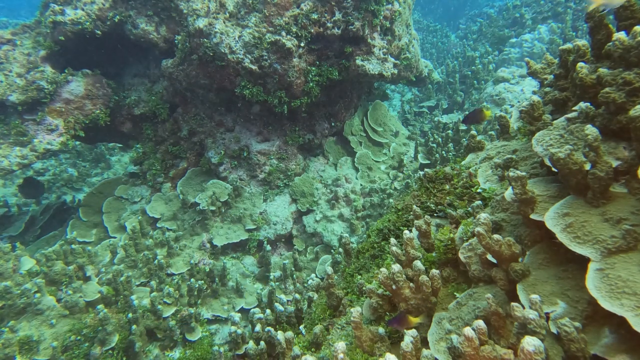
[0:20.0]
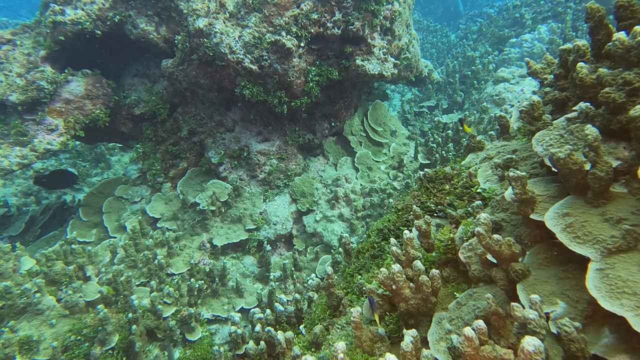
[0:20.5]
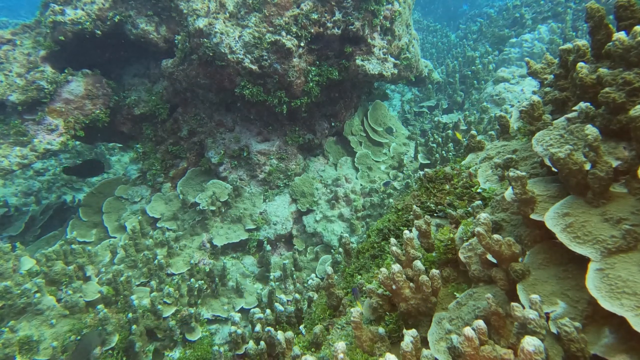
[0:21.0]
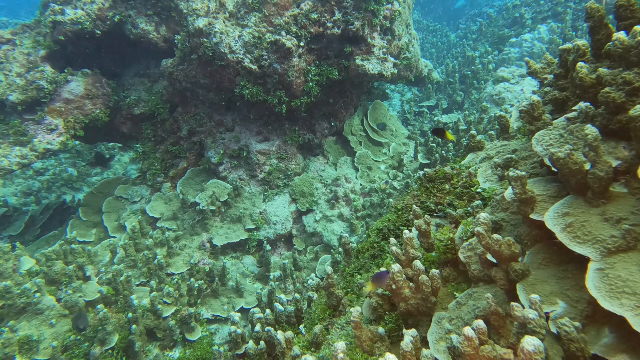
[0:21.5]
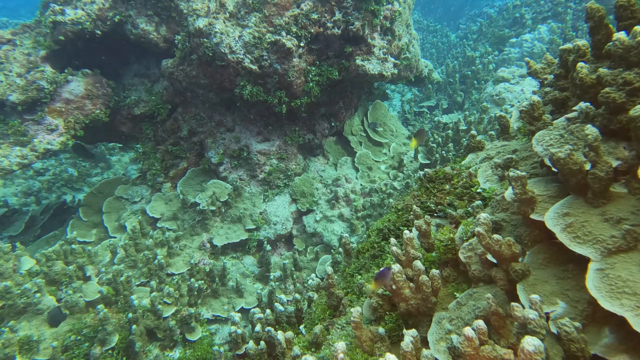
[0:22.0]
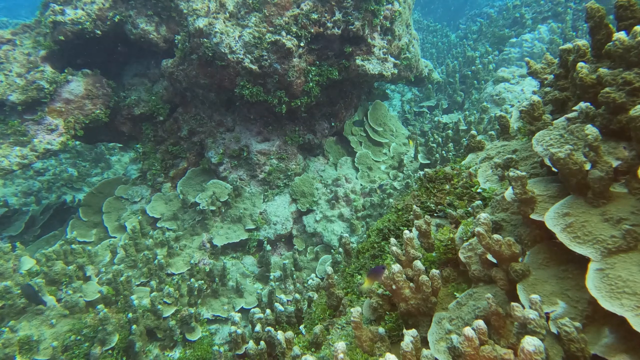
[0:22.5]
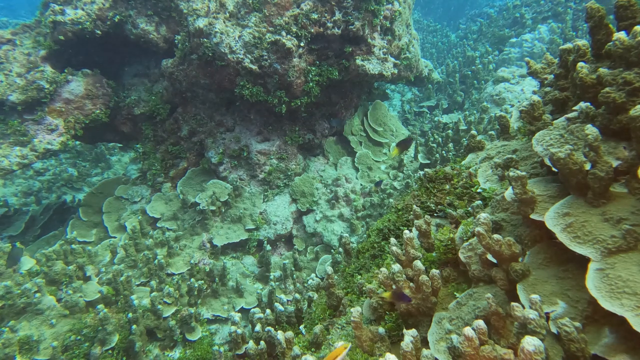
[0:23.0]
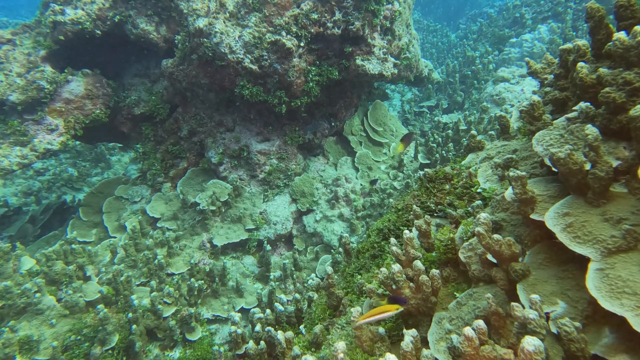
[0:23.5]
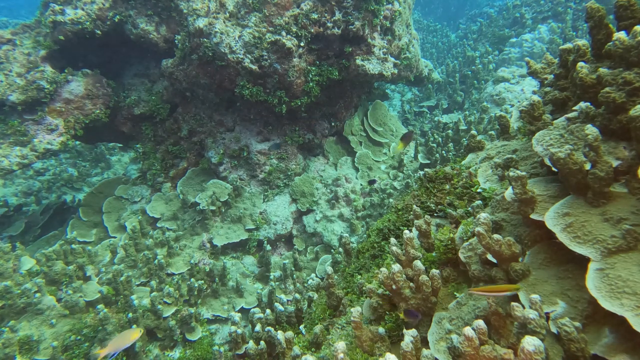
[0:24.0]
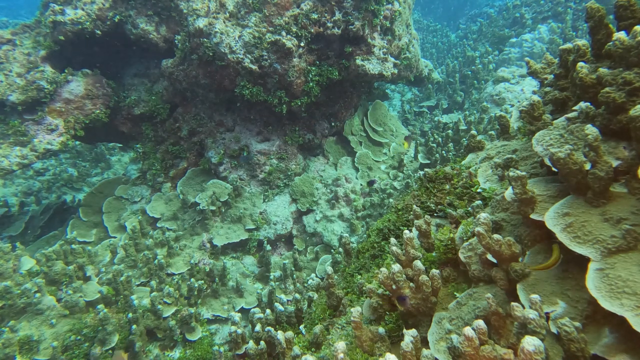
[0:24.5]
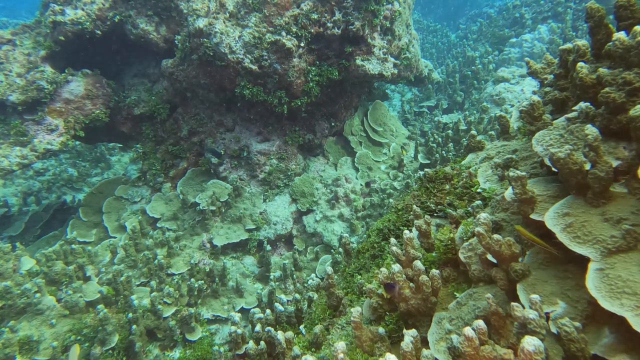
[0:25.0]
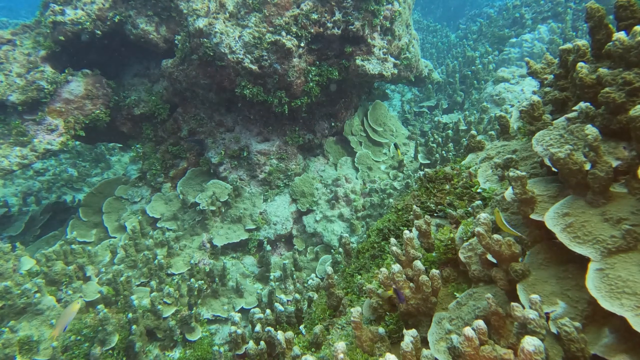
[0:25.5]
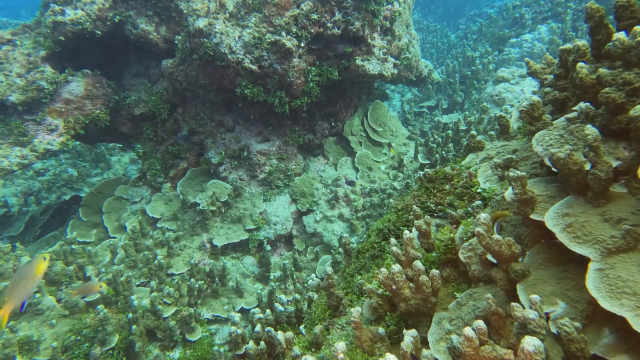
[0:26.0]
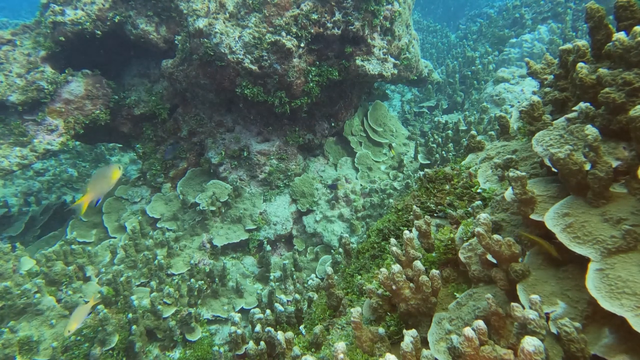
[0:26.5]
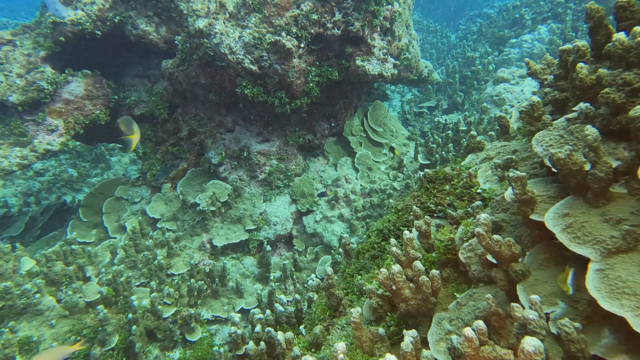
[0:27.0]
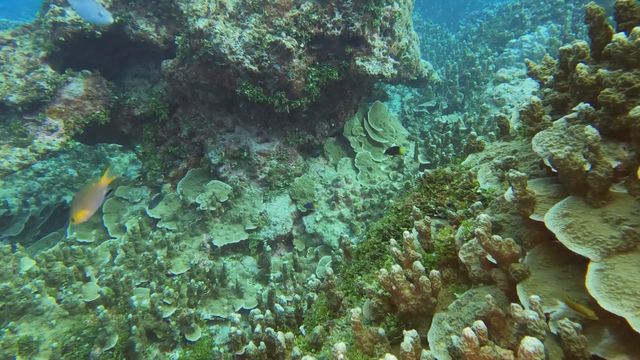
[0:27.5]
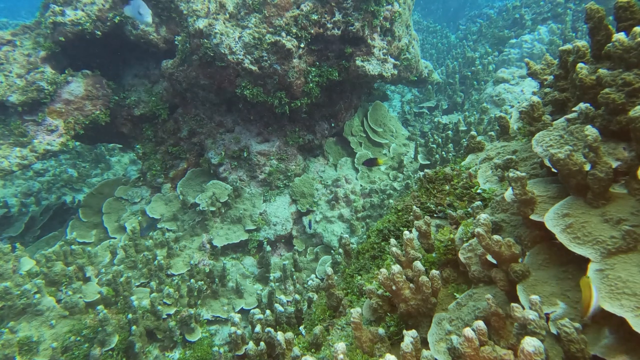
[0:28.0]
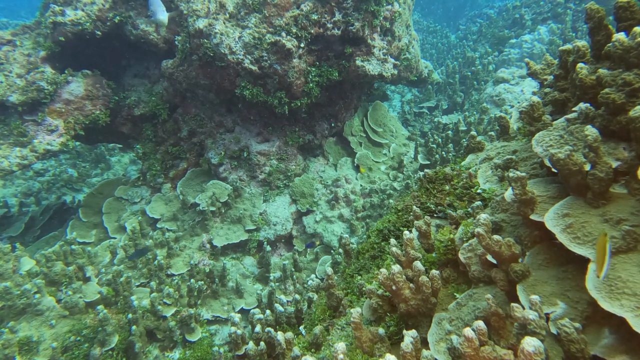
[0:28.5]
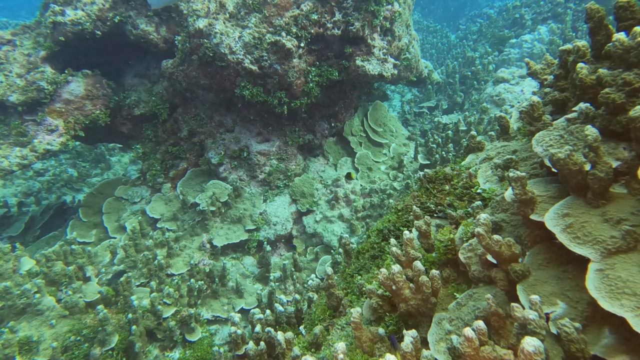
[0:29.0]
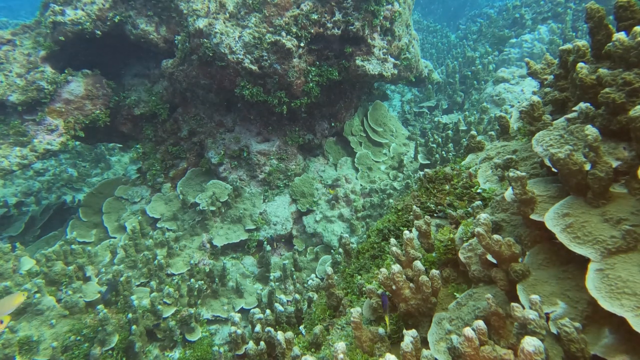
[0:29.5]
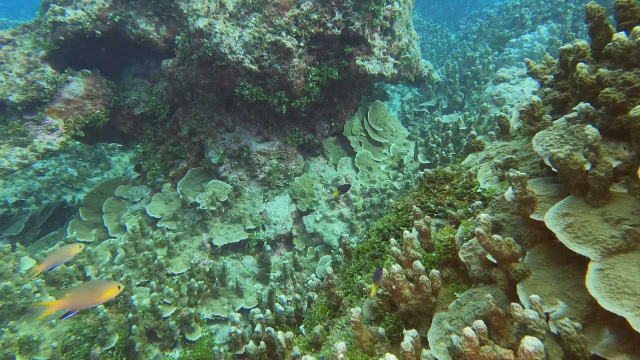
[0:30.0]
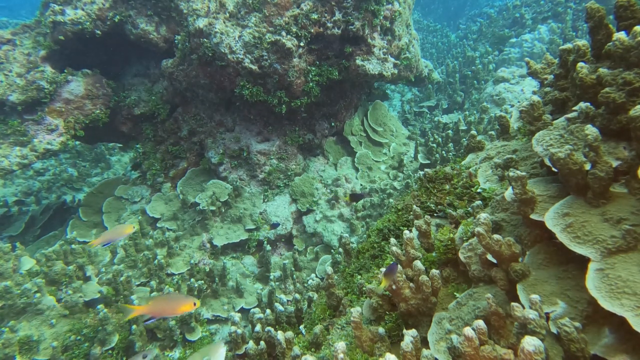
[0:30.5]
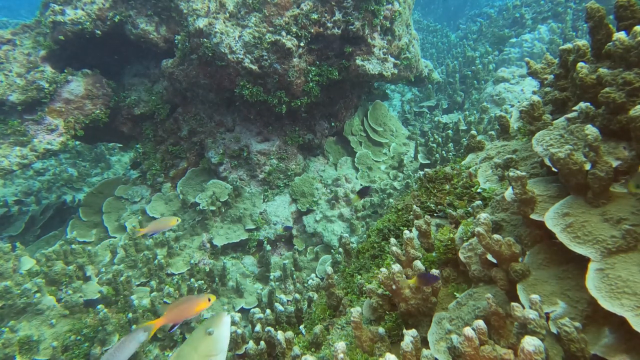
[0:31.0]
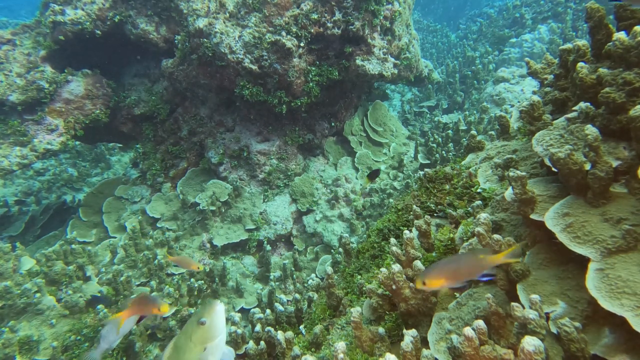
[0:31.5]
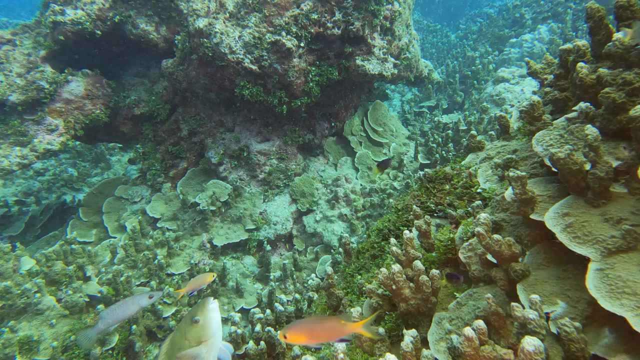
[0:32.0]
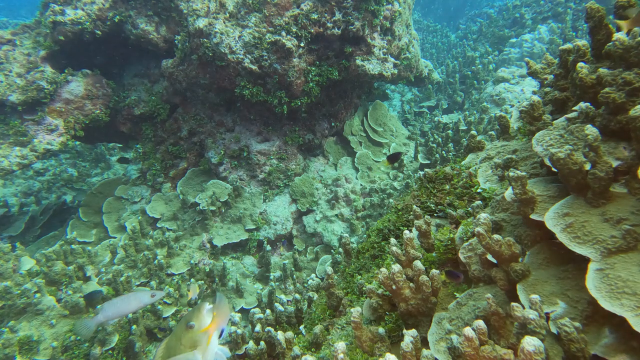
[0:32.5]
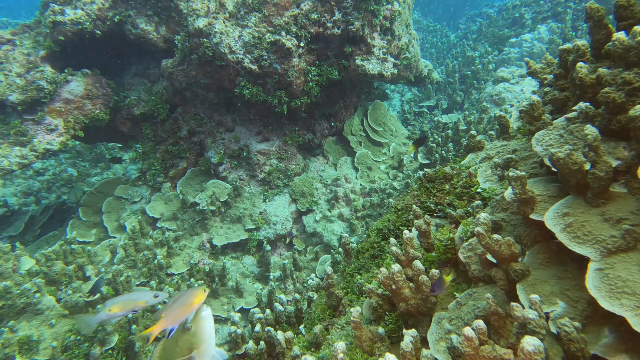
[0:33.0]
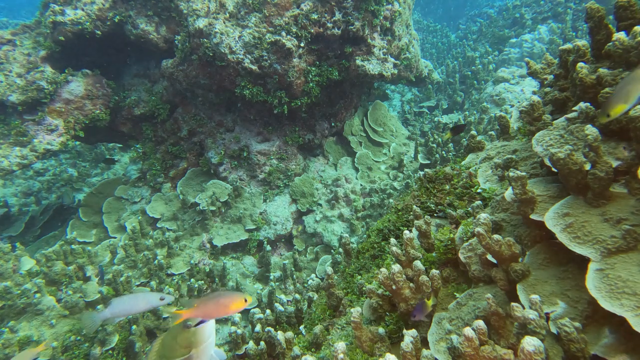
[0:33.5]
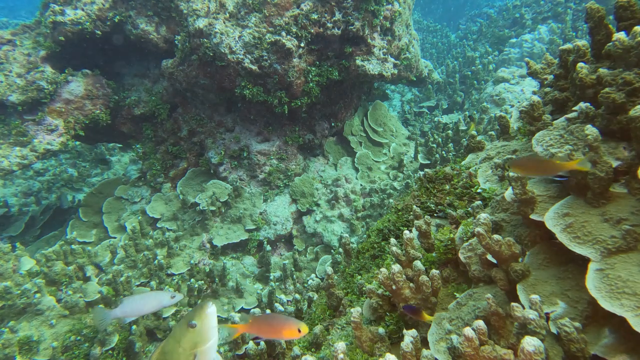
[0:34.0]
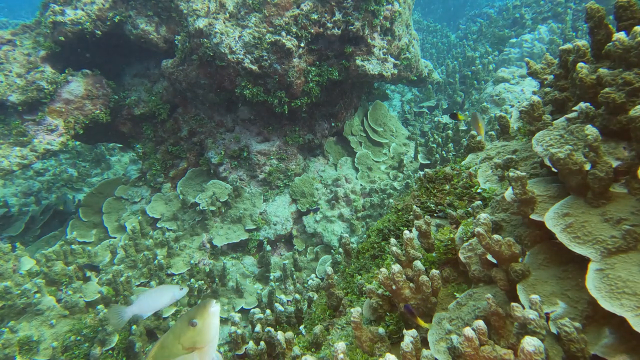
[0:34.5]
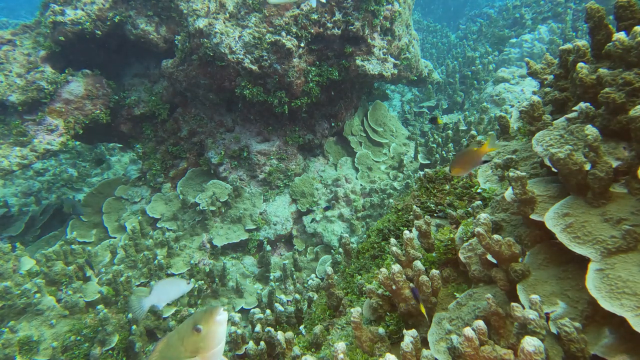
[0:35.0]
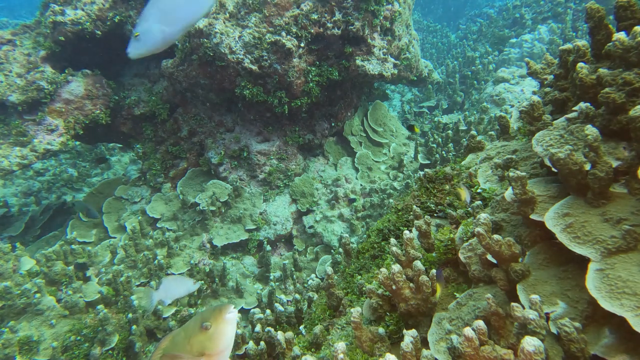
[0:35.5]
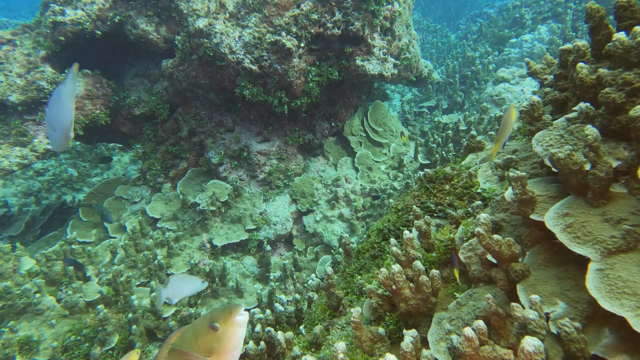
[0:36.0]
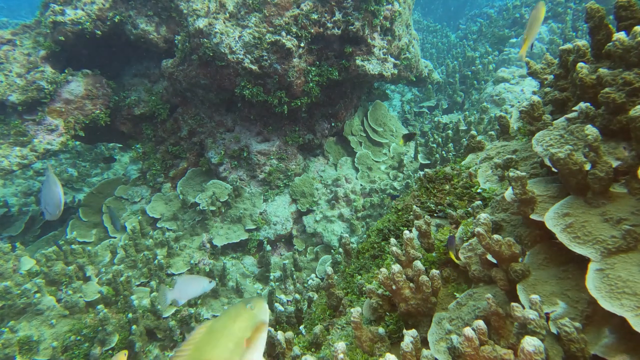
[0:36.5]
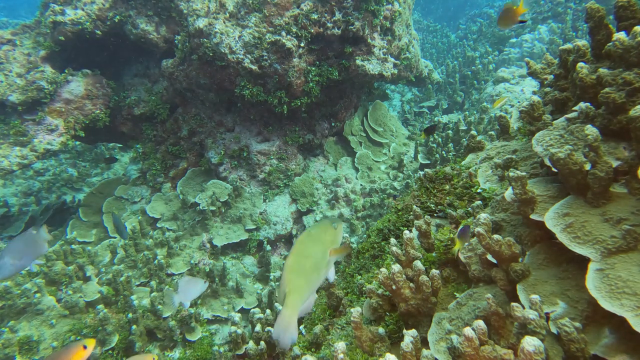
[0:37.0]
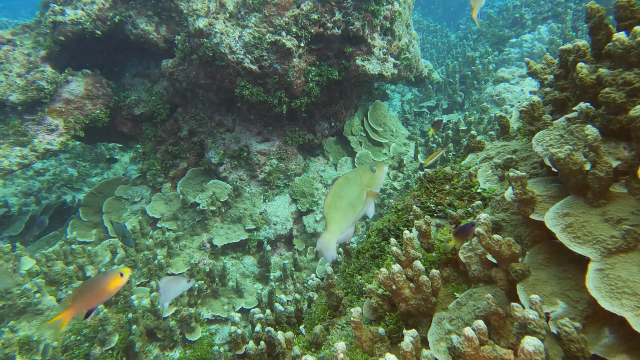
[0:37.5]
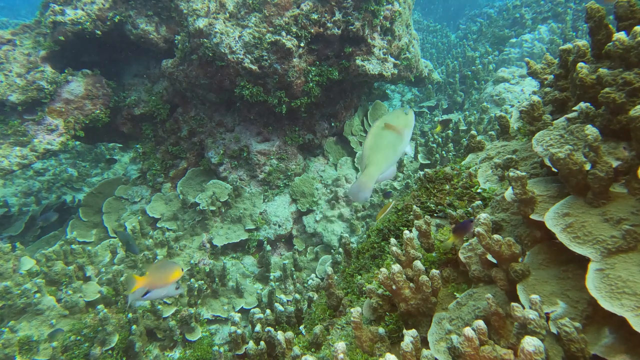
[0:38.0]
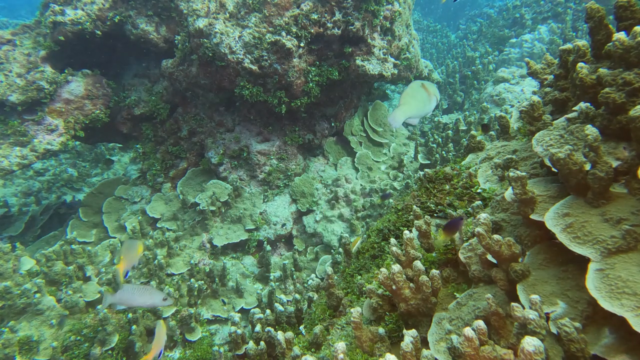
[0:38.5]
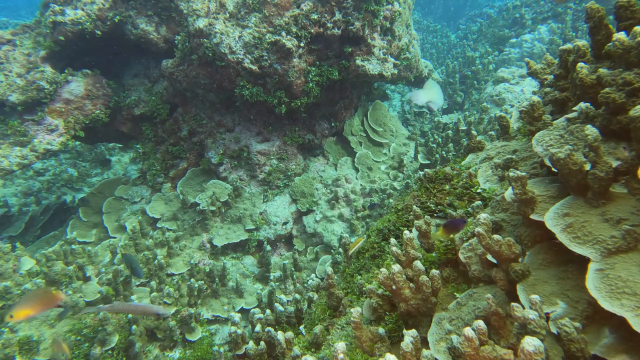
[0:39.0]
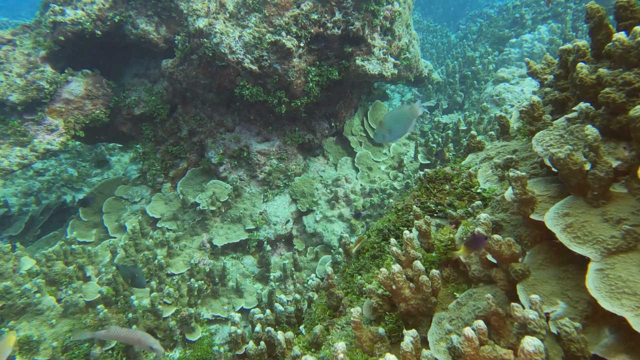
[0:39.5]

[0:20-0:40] The scene continues from the exact same perspective; the camera appears static and does not move, change perspective or zoom in. The coral remains visible, including the flat coral and the finger coral, along with various types of reef algae or plant life: green plant-type things on the coral and rocks. Several different types of fish come in and out of the frame, including yellow-looking fish, blue-looking fish, more neutral-colored fish and black-colored fish, ranging in size from quite small to medium to larger. No non-fish are visible; only fish appear.